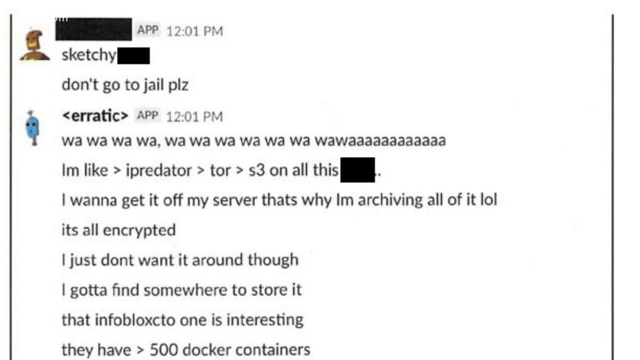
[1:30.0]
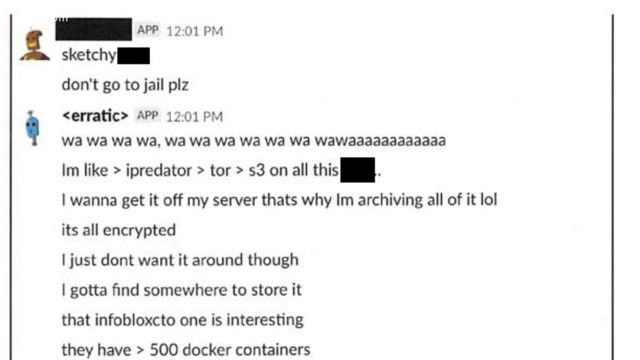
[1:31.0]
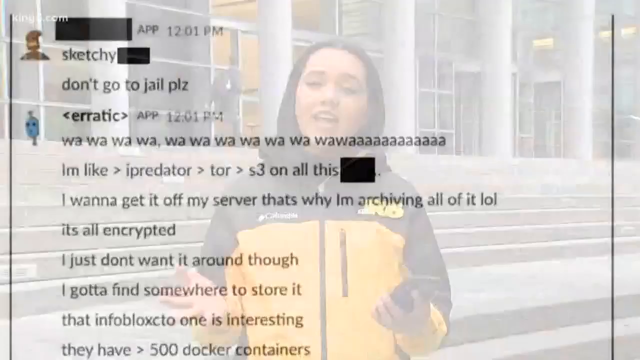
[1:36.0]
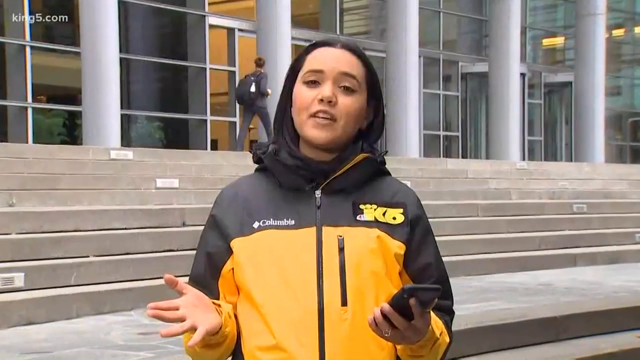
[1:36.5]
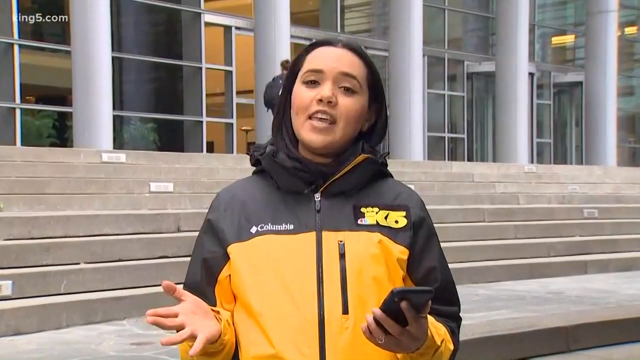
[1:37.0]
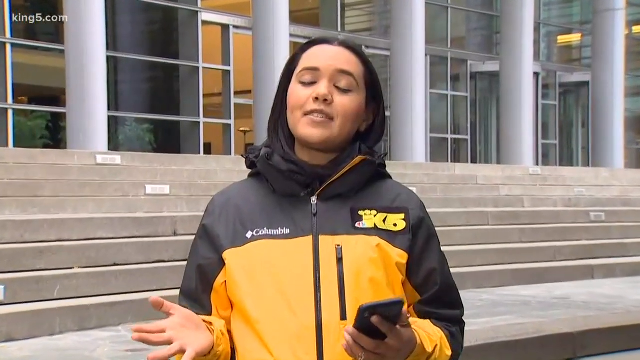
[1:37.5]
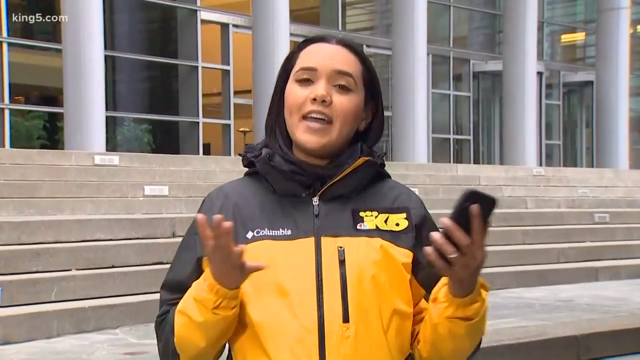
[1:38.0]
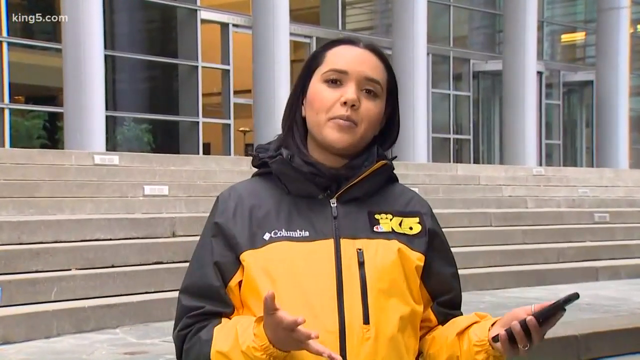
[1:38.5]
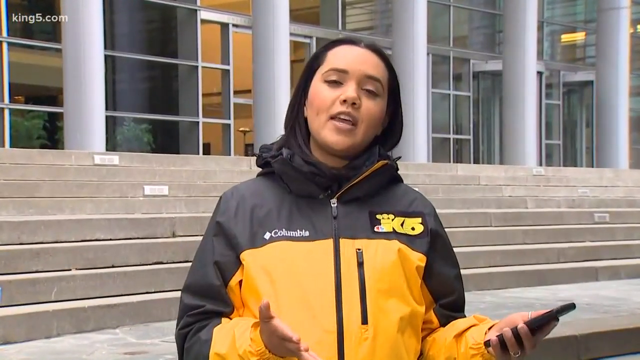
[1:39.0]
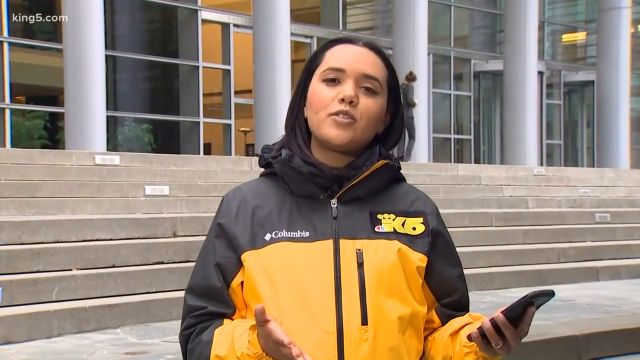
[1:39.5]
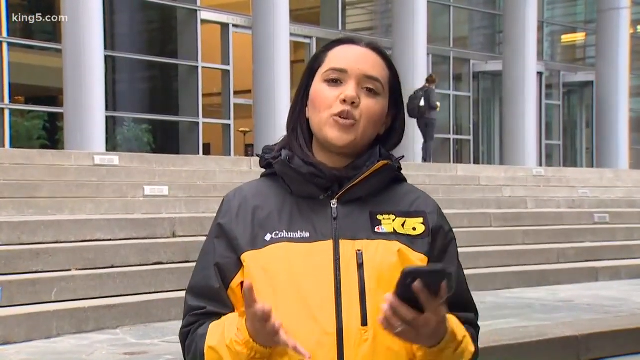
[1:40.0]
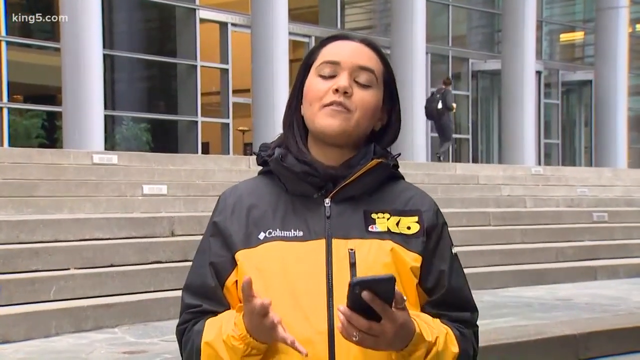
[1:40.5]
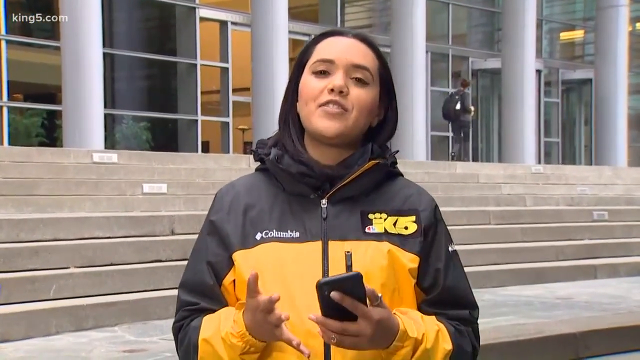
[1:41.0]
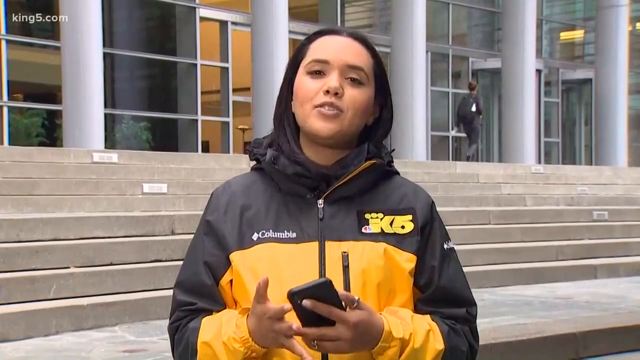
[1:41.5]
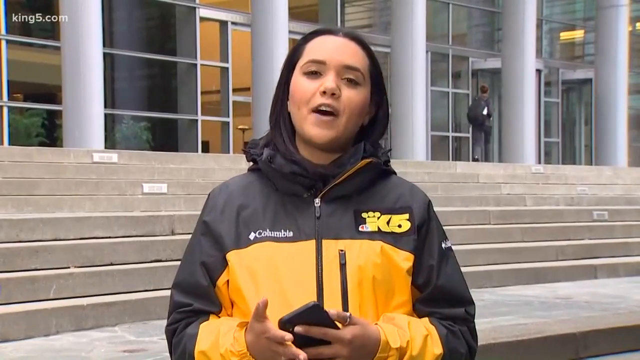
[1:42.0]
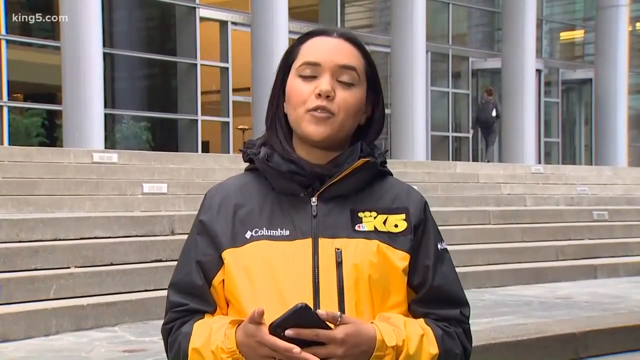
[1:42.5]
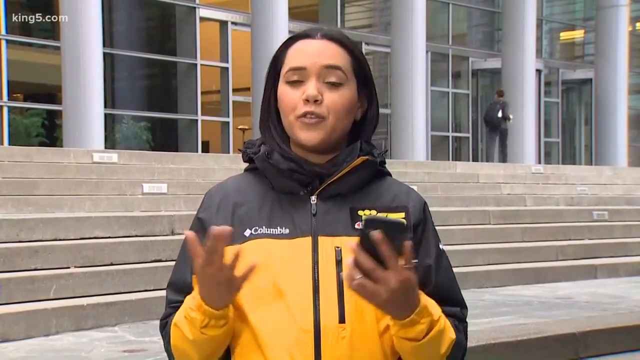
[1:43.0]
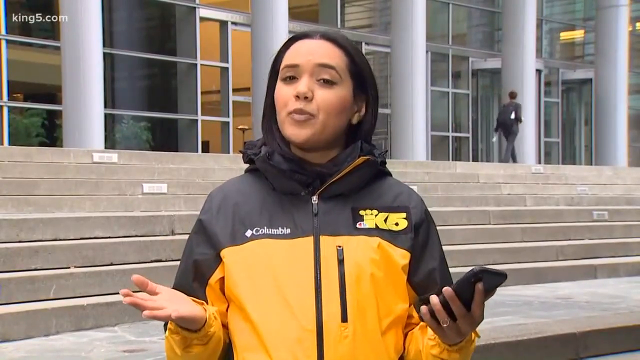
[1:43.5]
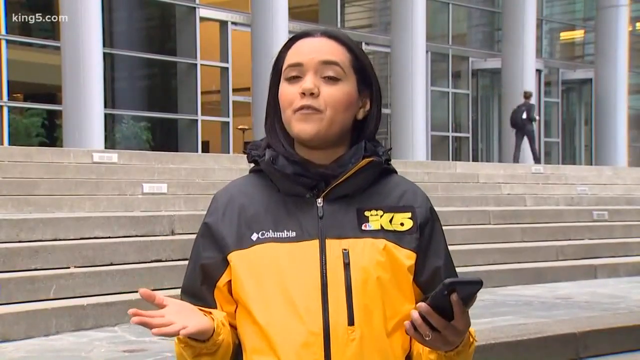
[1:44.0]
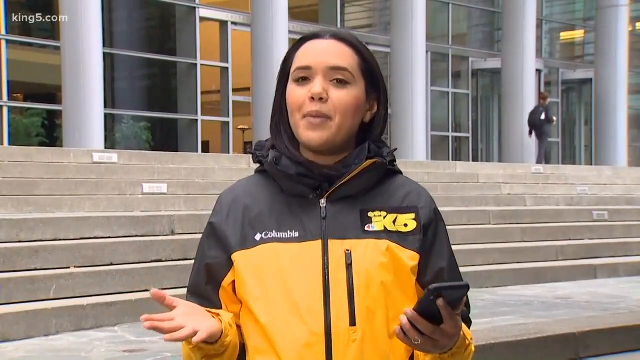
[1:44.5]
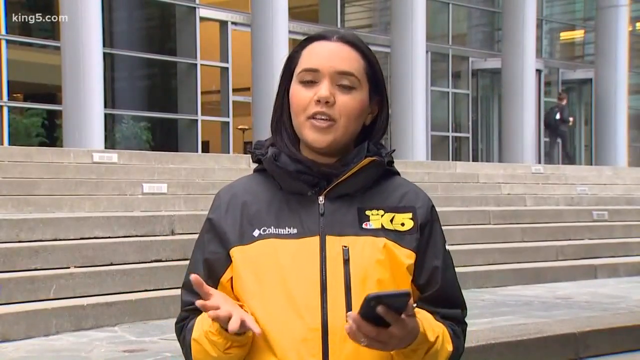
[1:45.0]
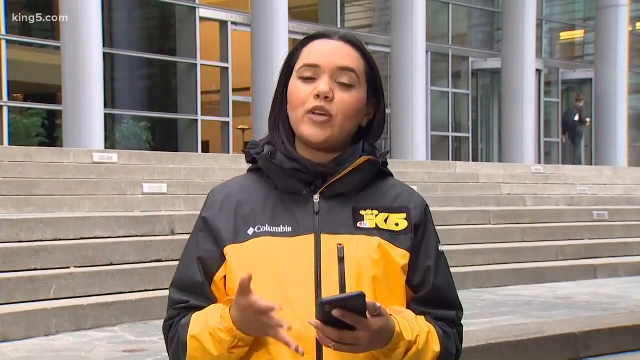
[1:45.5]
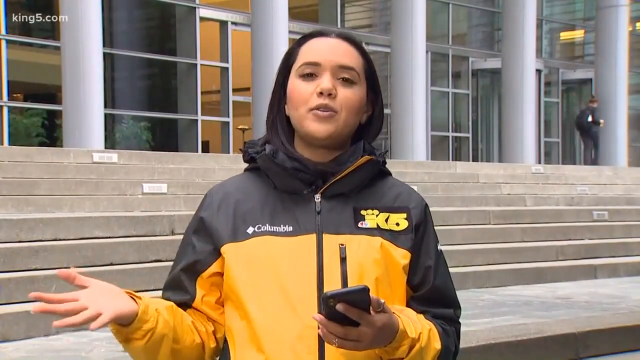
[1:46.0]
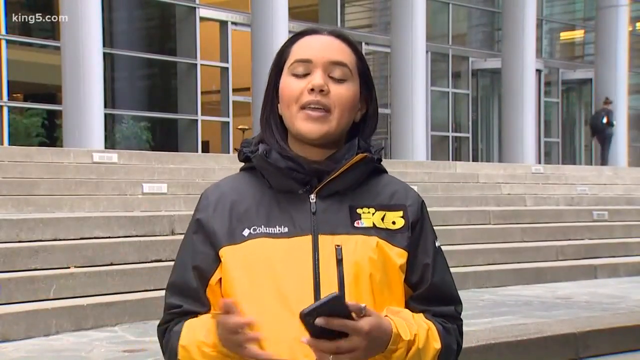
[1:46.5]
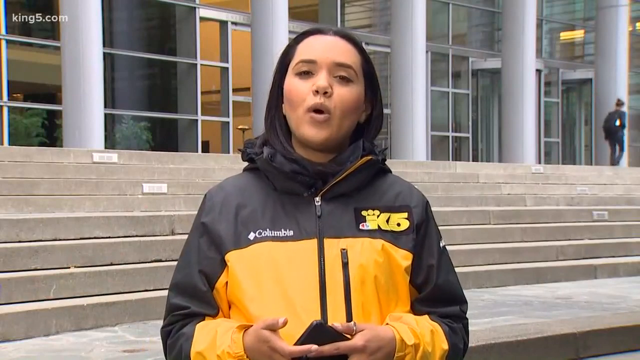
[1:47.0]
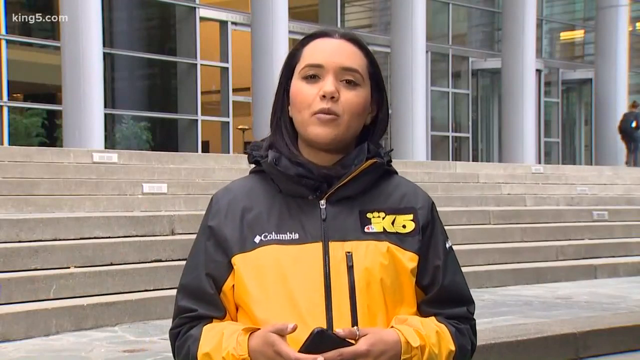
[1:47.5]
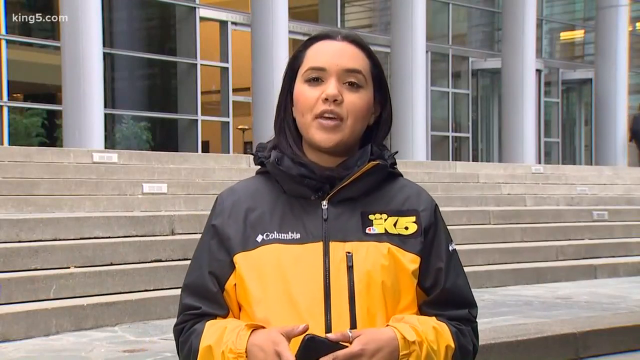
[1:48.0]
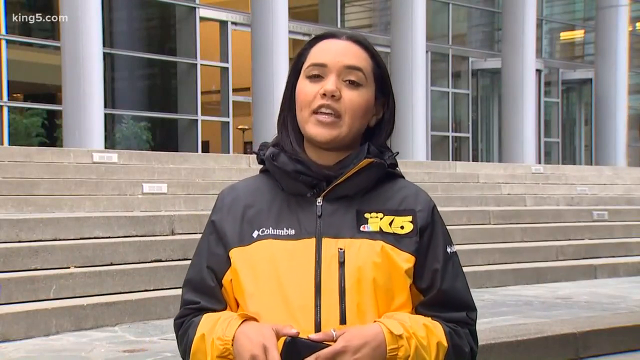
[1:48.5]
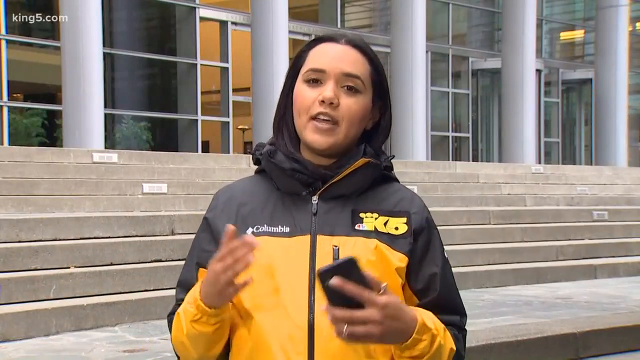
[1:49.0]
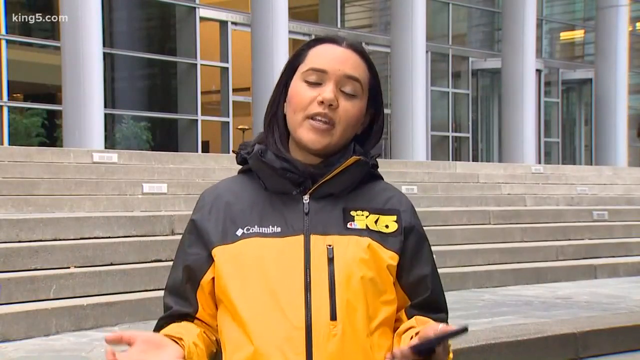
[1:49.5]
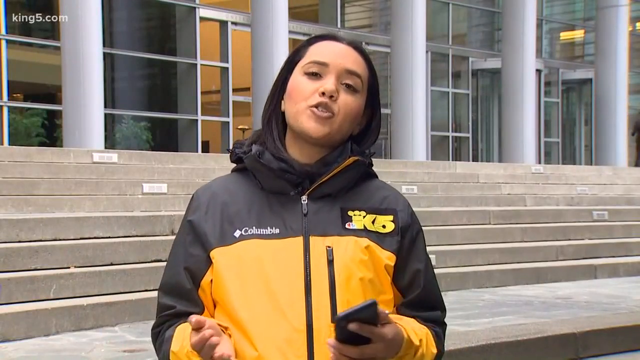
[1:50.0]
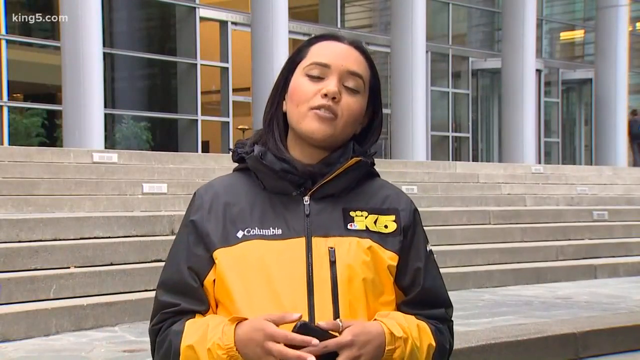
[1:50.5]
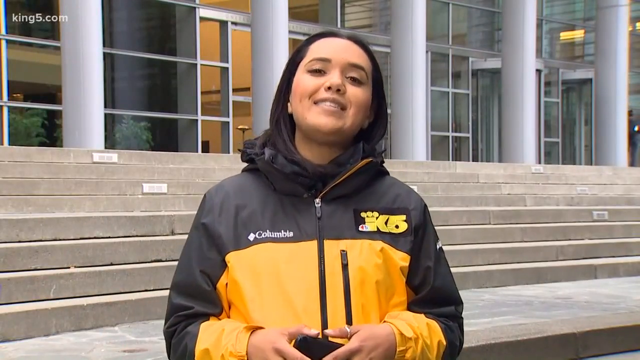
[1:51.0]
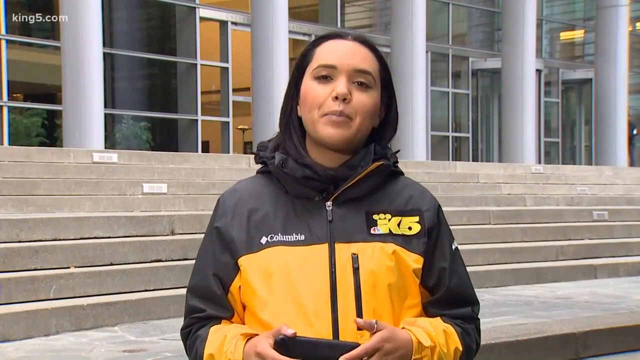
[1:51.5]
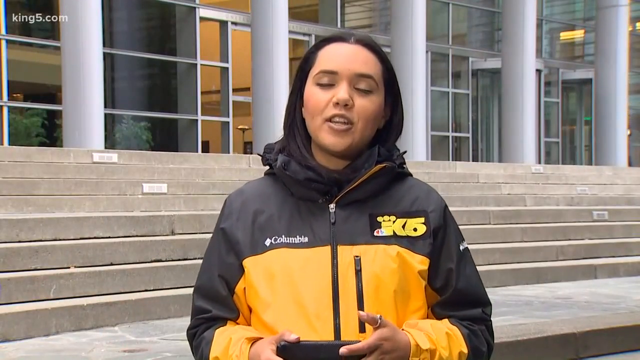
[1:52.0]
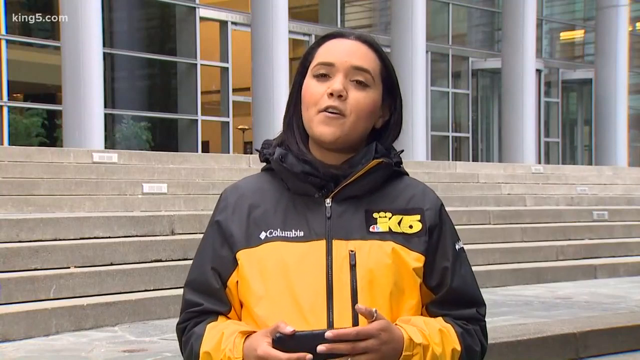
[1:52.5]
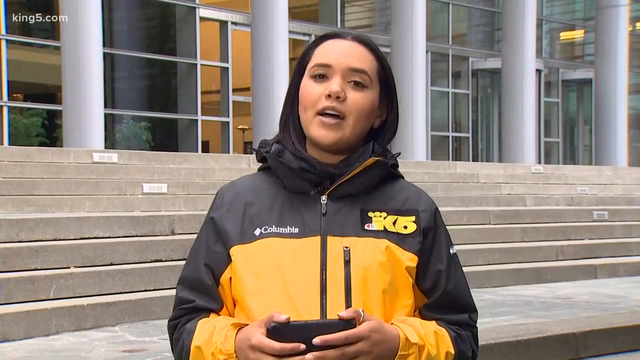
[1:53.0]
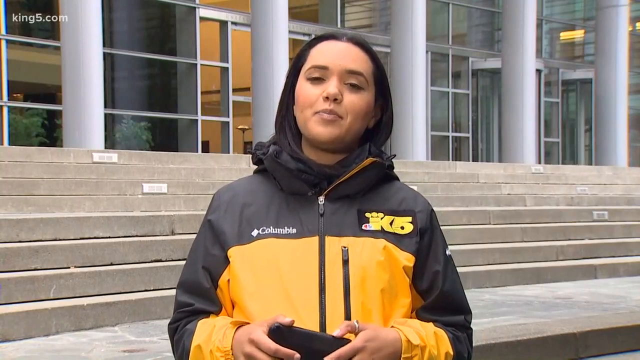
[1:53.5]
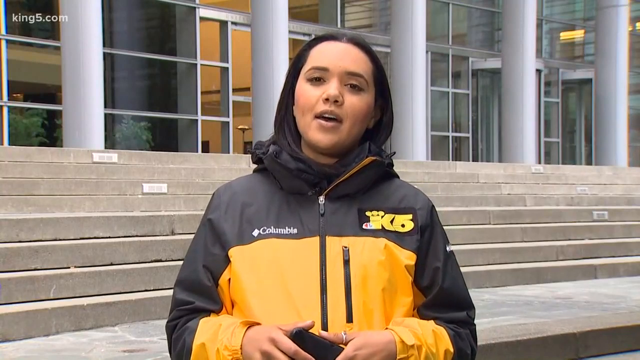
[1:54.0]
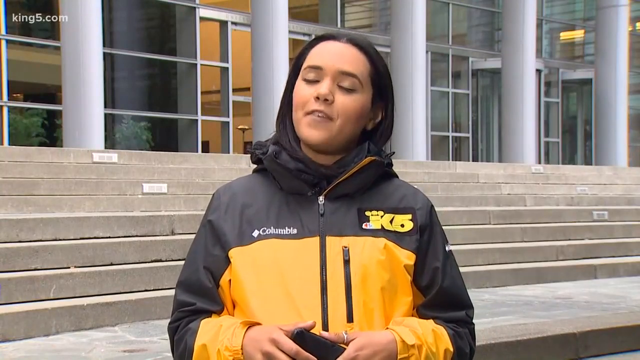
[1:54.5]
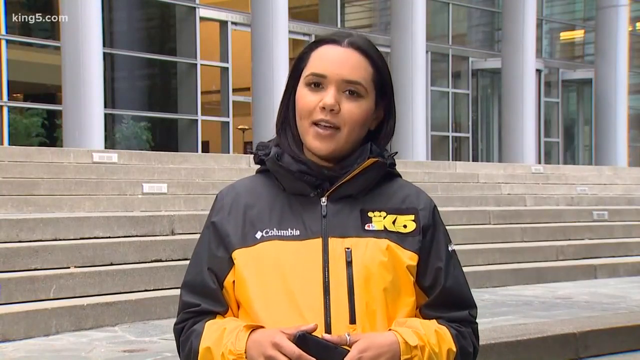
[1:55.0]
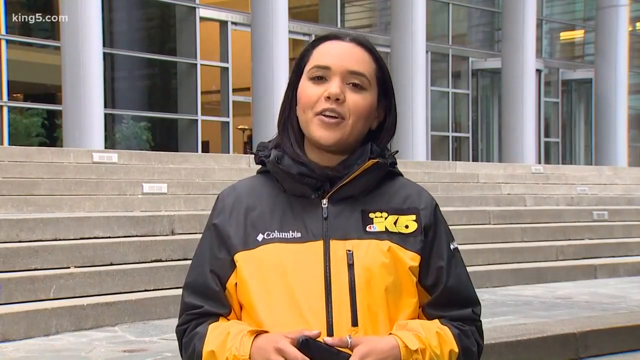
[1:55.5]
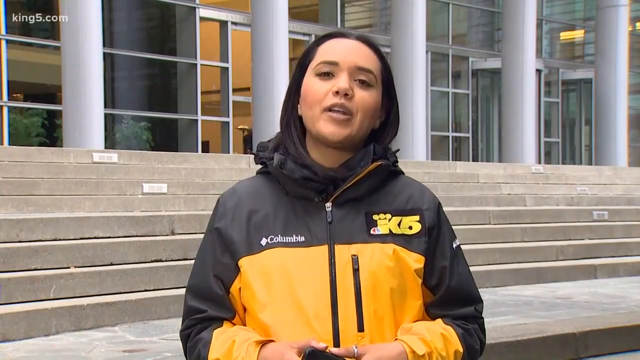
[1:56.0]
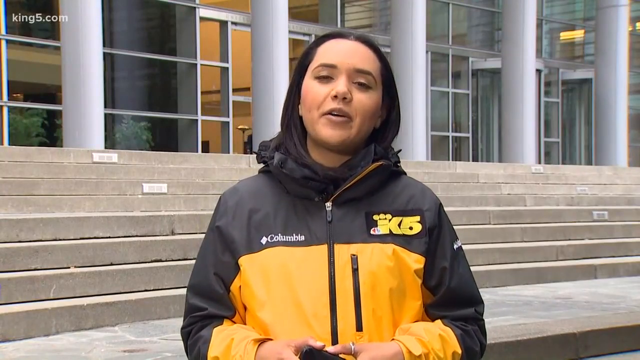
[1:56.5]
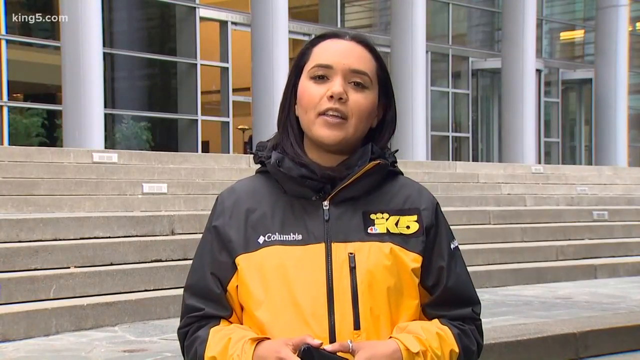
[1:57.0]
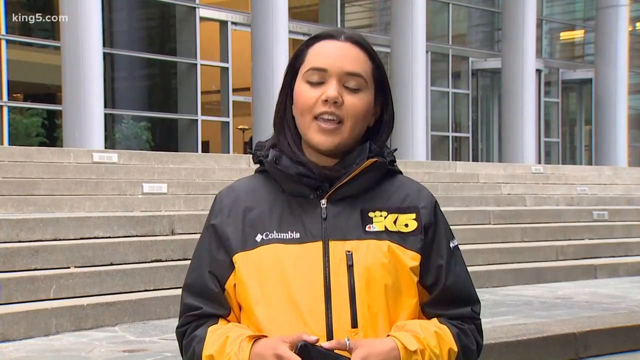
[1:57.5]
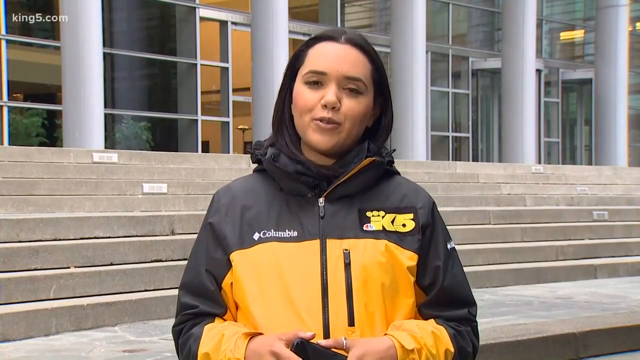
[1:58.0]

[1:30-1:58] A white background with some light yellow and orange appears under the title "Capital One Data Breach", along with a router with two red lights on LAN2. Captions to the right of these photos read "Paige Thompson arrested", "106 million customers in the US and Canada", "140,000 social security numbers" and "80,000 bank account numbers". Messages from a chat between two people are shown: one says "sketchy, don't go to jail please", and the other includes "I wanna get it off my server, that's why I'm archiving all of it", "It's all encrypted, I just don't want it around though" and "They have 500 docker containers". The video ends with the news reporter in front of the building with clear windows, grey stairs behind her, wearing a black and yellow Columbia jacket.